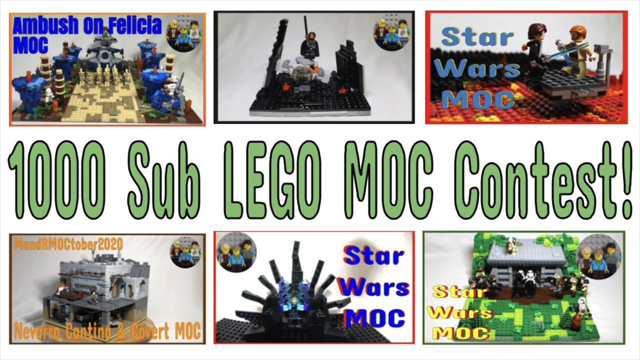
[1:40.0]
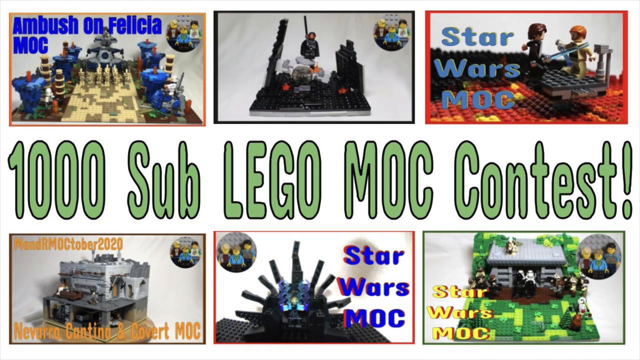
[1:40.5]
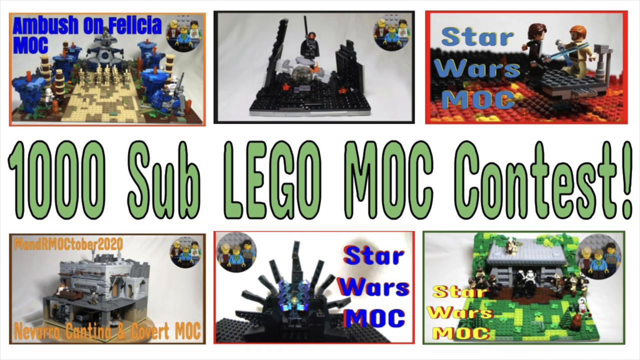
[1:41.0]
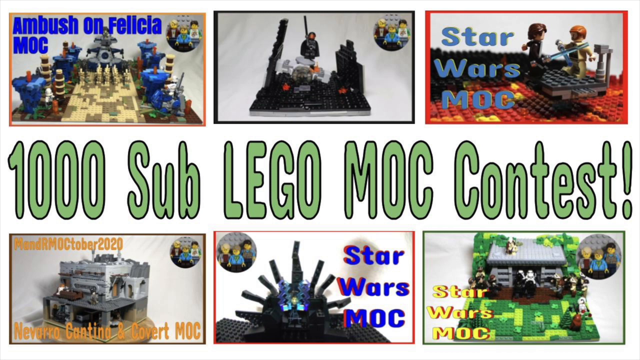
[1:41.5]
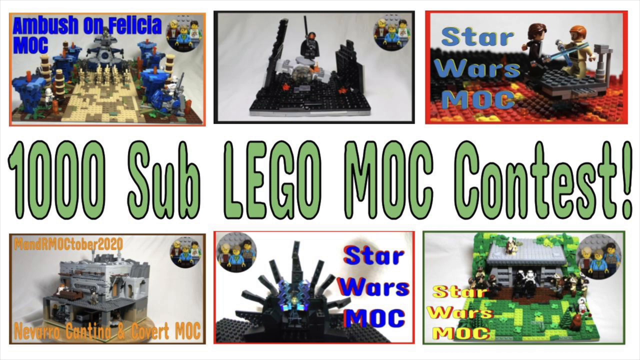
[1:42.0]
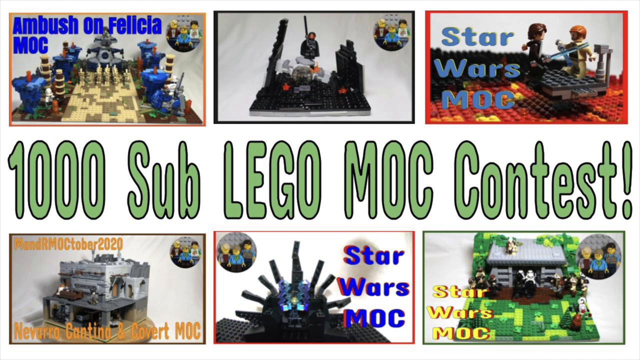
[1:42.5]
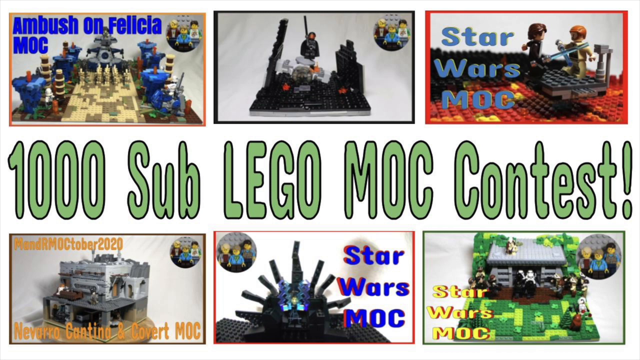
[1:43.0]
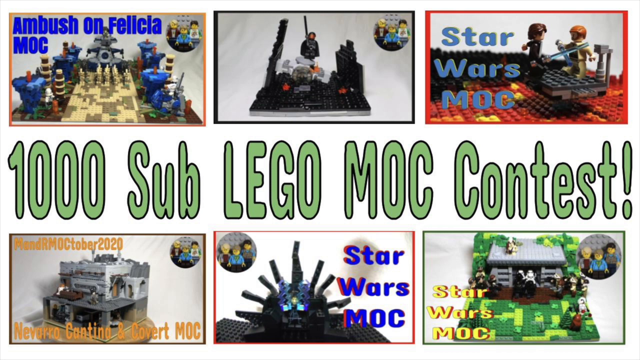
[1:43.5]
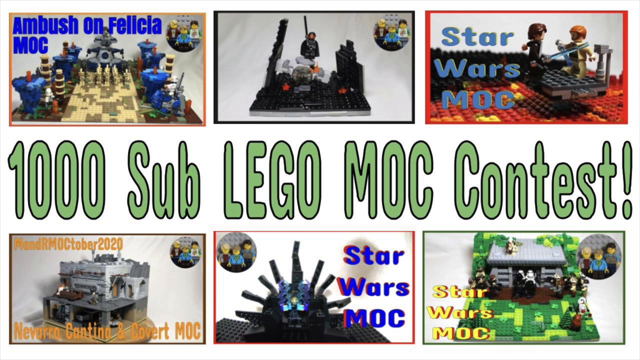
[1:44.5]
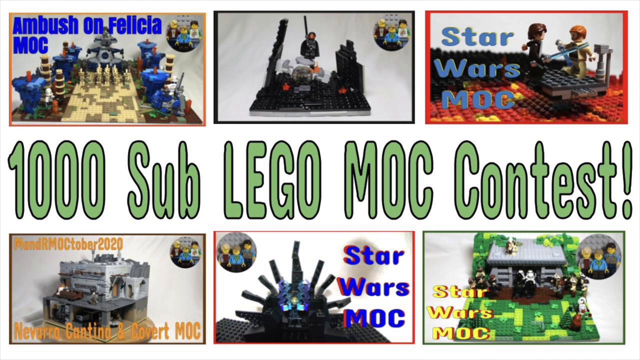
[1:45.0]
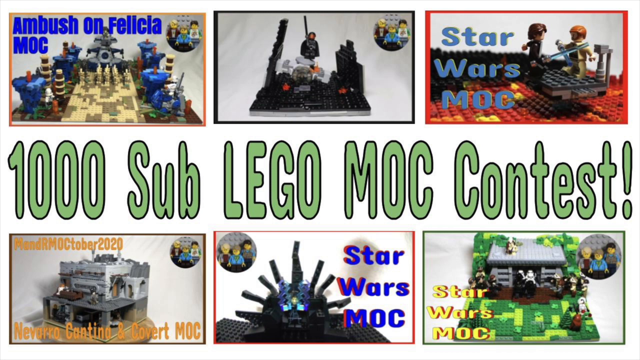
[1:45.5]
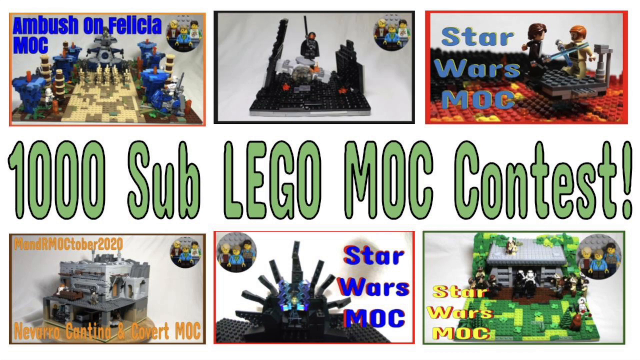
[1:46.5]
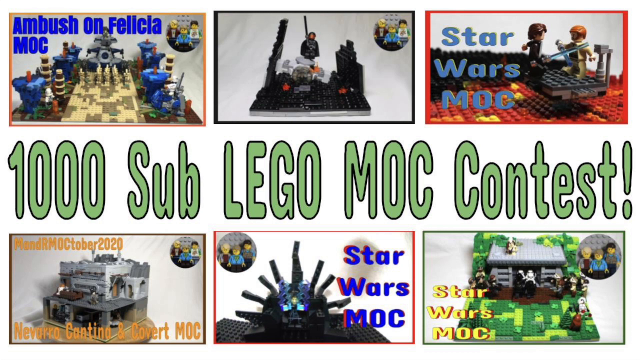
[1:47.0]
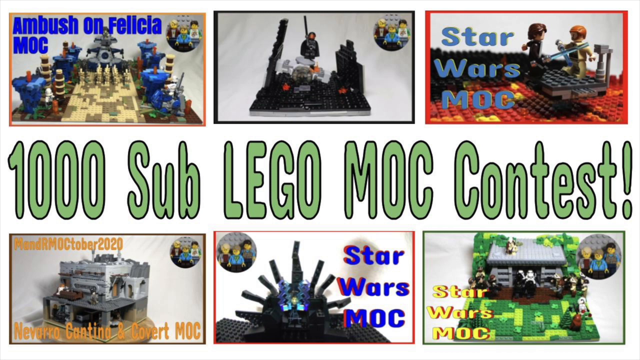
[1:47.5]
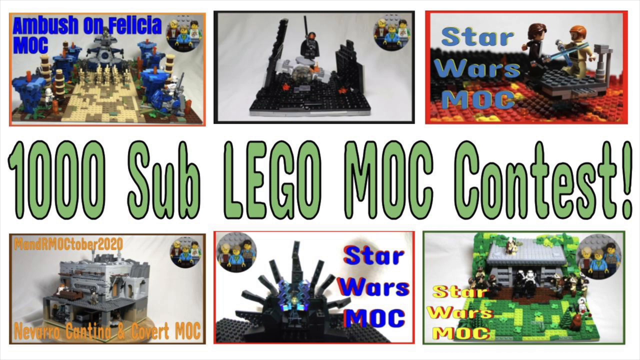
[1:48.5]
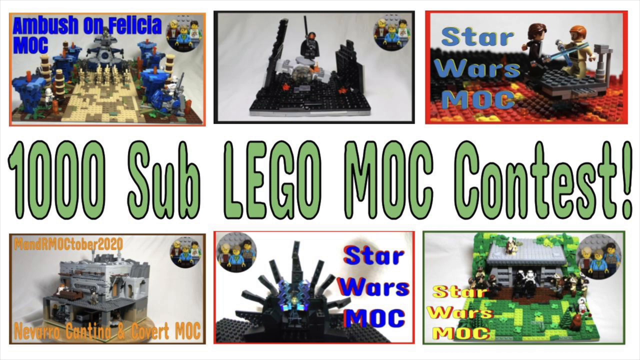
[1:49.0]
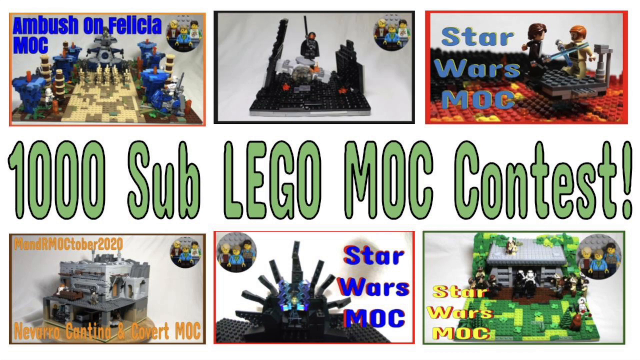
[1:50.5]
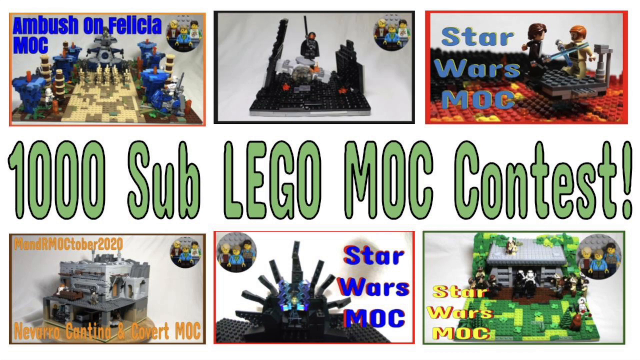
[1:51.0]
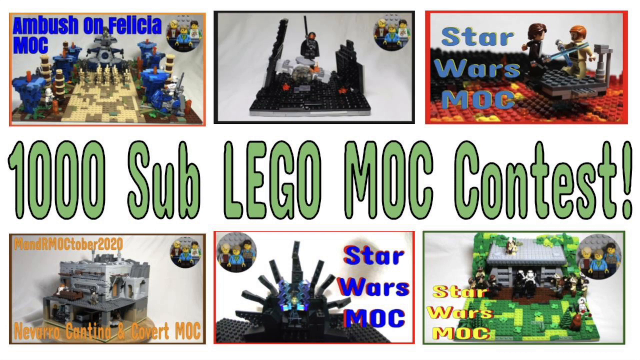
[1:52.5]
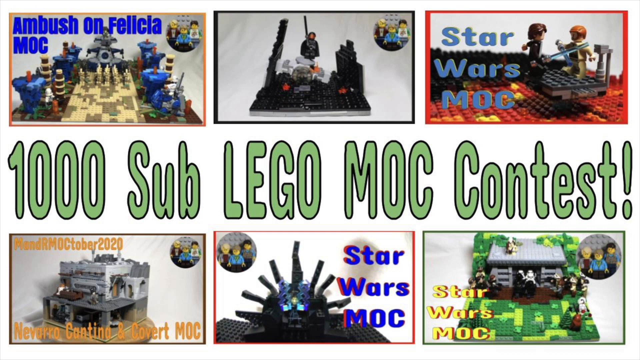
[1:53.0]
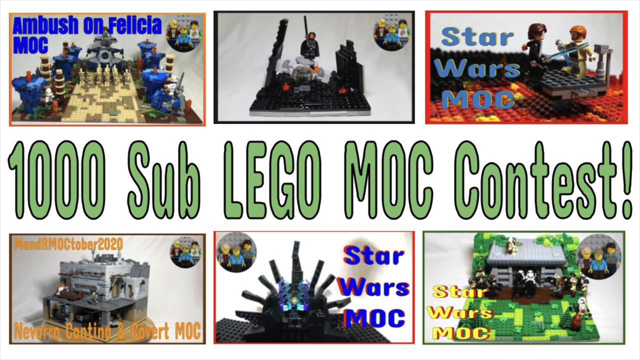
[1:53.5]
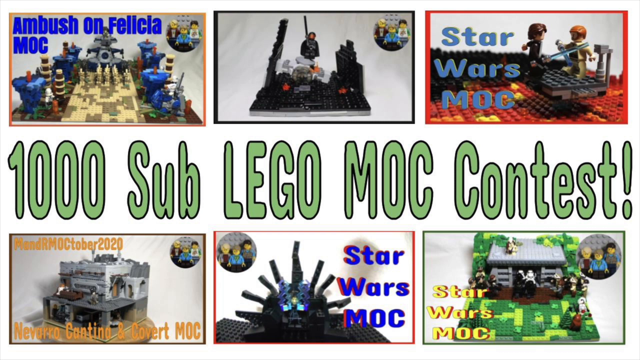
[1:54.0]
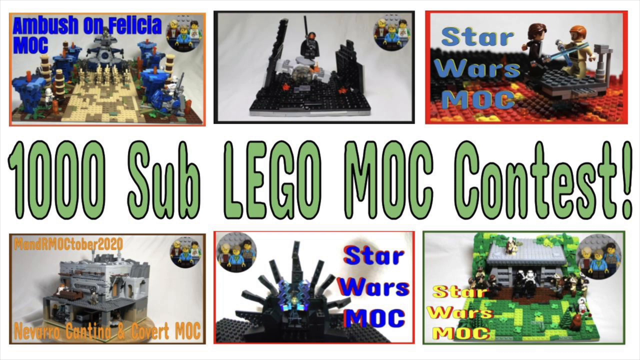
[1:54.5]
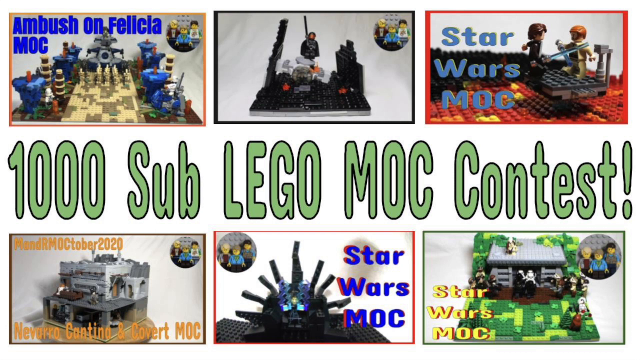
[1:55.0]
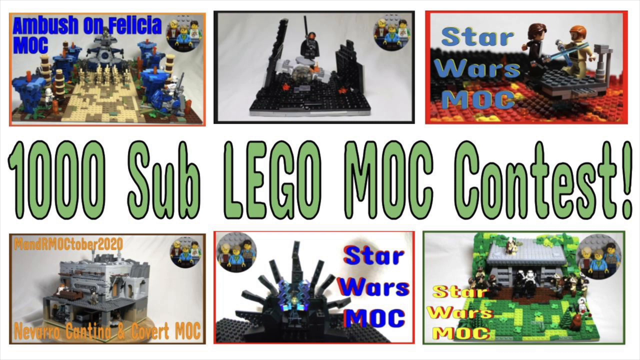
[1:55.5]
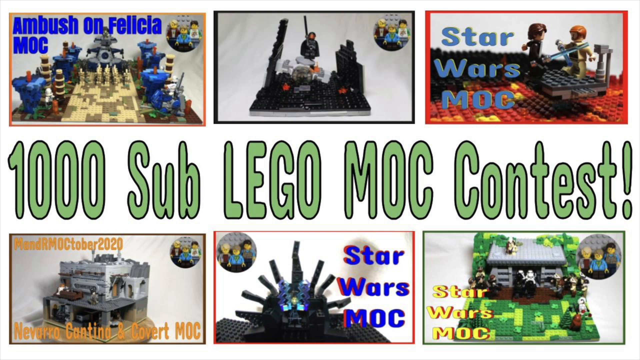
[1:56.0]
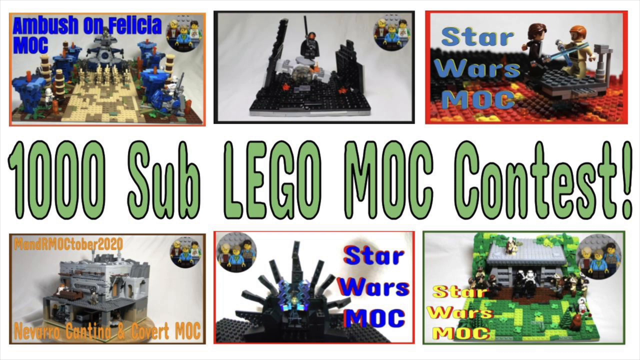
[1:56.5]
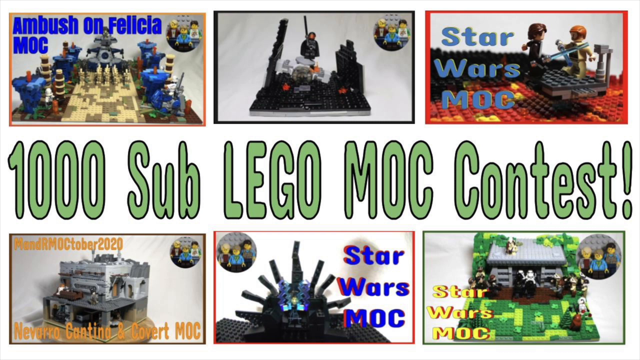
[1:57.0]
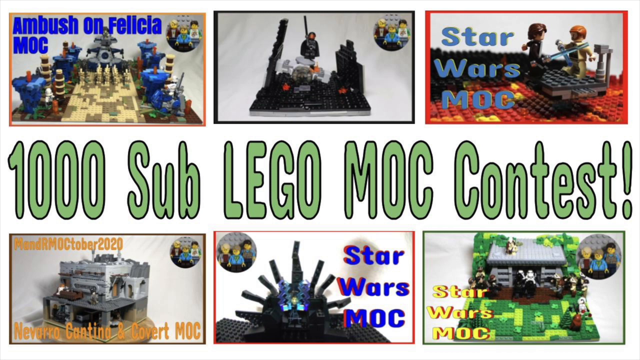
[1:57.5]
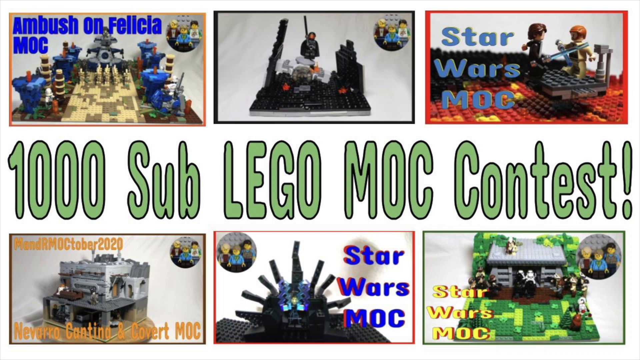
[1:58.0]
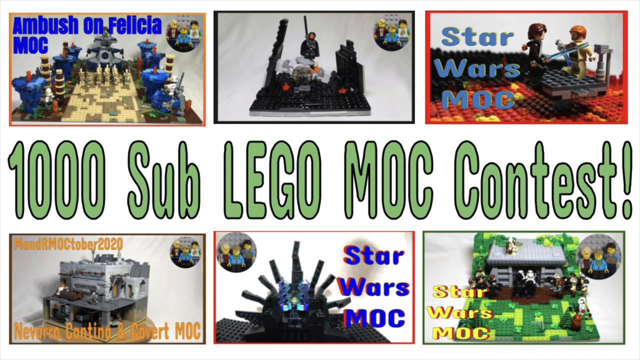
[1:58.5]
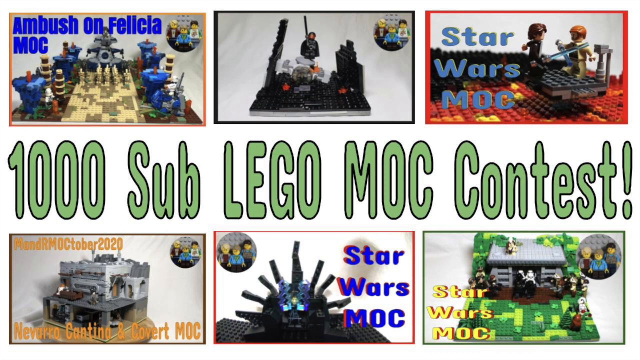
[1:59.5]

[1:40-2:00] The video goes back to the initial page with the designs, which says "1000 sub Lego MOC contest!" with an exclamation point. There are three images above it and three below it, most of them dealing with Star Wars. The top left one appears violent, as someone seems to have a weapon and be shooting, all made of Legos. The top middle one has no title; it is kind of dark and white with a person who looks ready for armor. The top right one is "Star Wars MOC" and shows a couple of individuals kind of on a plank that is black and kind of elevated from the base. The bottom left one reads something ending in "October 2020." The bottom middle one is "Star Wars MOC" with a different design; it looks dark and could possibly be Darth Vader. The bottom right one is also "Star Wars MOC," showing a green grassy area with what looks like a fence in front of a house.